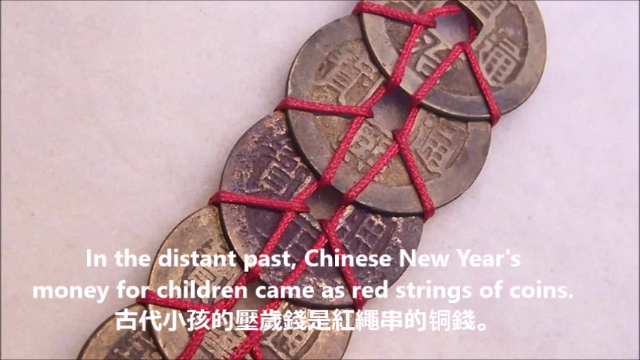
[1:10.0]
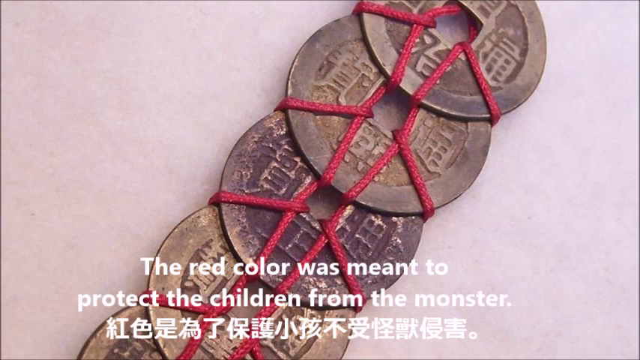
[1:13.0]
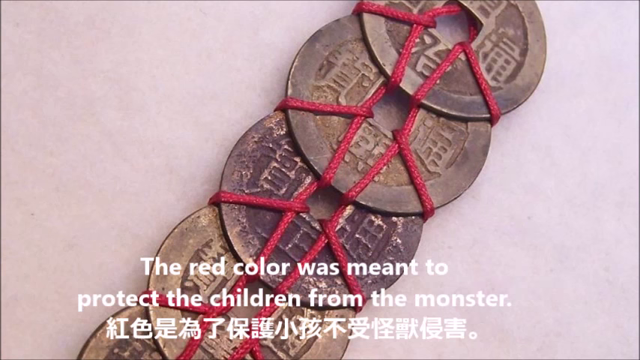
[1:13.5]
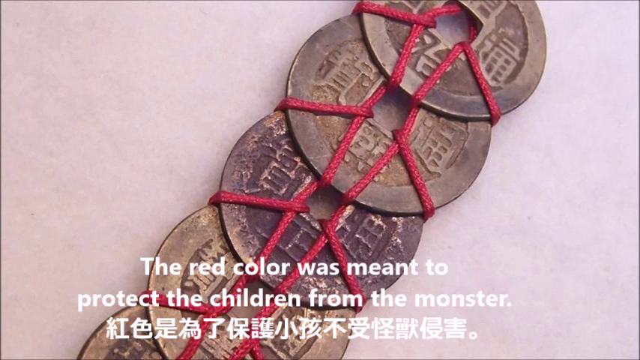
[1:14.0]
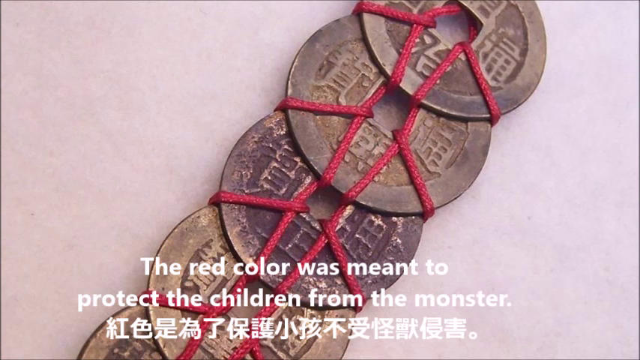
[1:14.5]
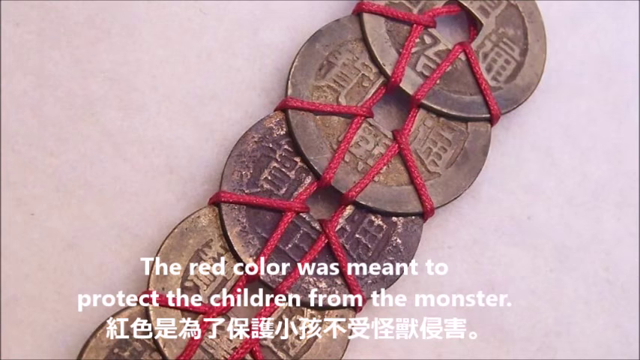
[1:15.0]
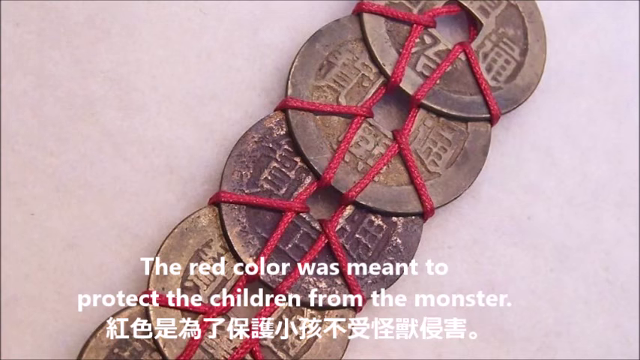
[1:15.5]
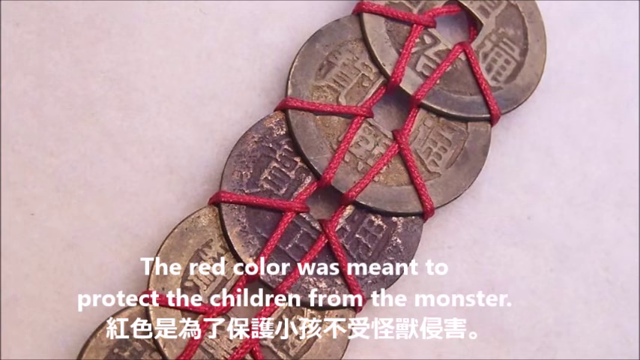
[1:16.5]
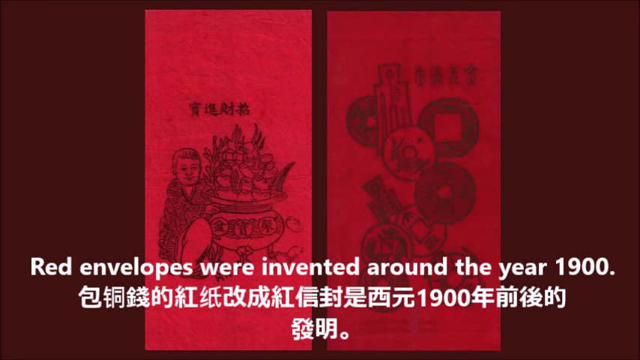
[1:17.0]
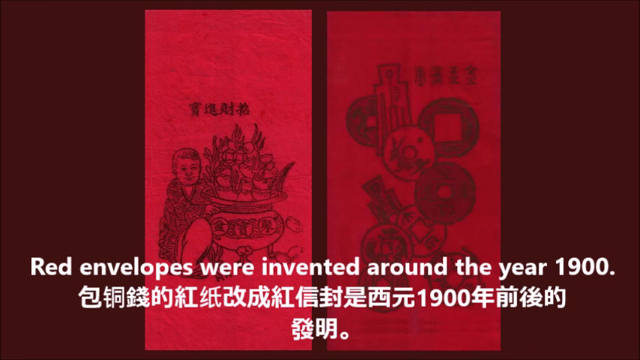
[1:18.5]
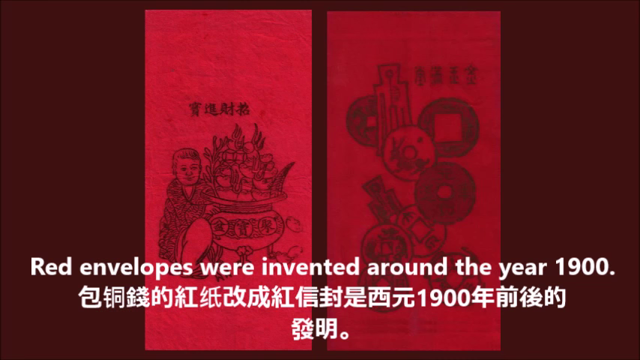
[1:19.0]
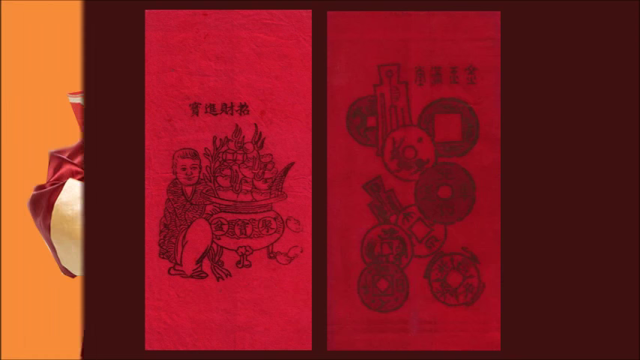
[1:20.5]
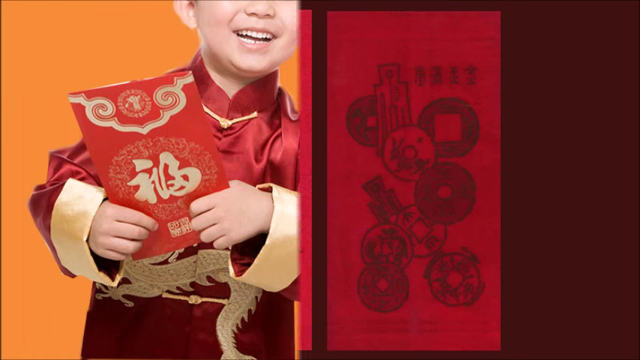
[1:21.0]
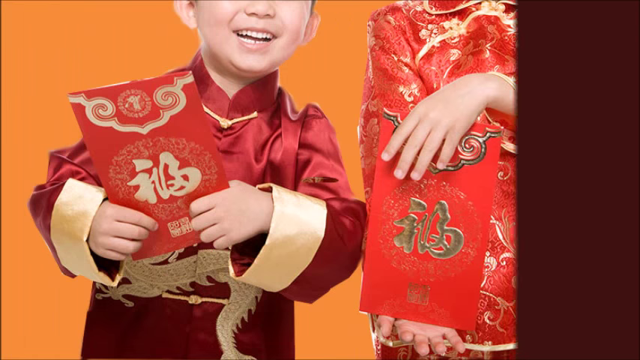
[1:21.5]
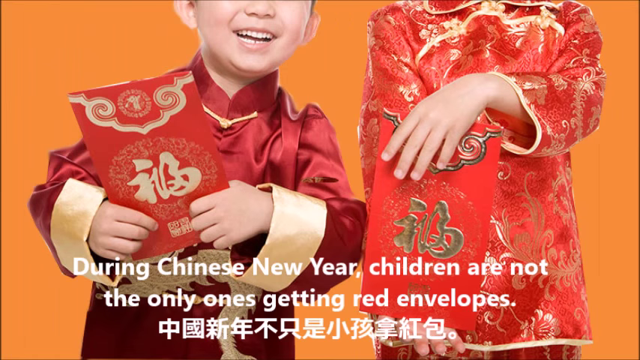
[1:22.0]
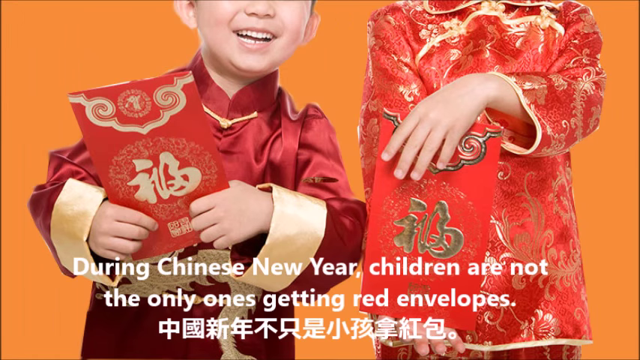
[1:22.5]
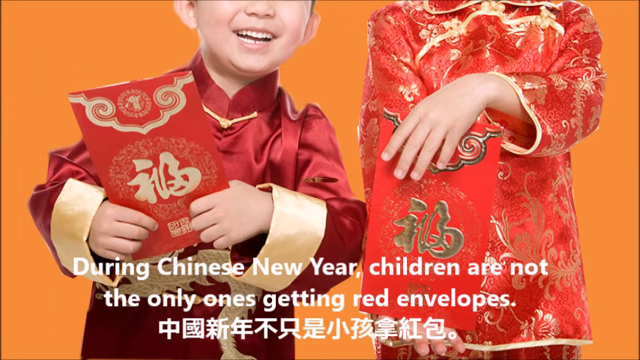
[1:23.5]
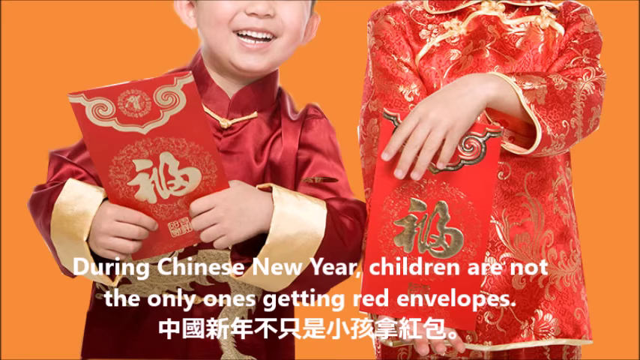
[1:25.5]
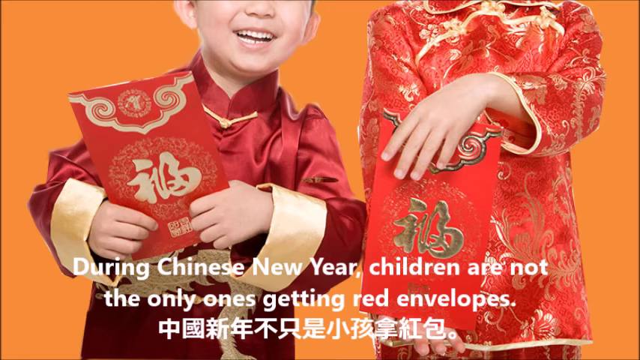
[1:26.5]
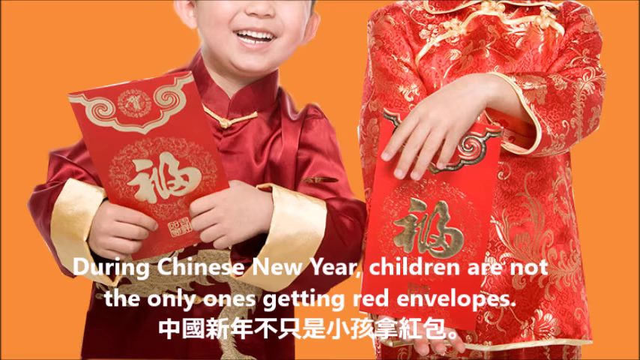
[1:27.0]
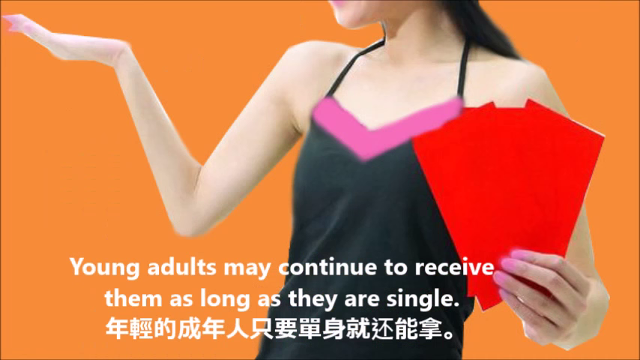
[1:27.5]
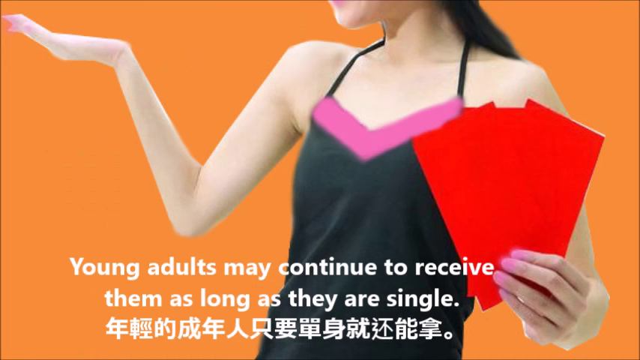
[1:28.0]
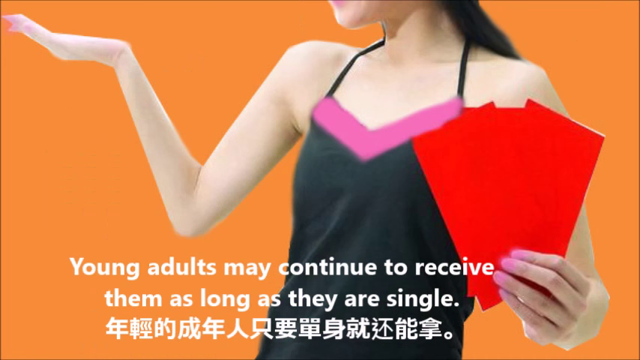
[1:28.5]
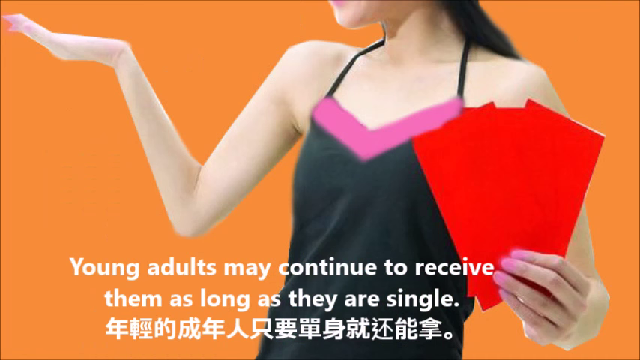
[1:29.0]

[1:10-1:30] White text at the bottom reads "the red colour was meant to protect the children from the monster". Two red envelopes appear, centred in the middle of the screen. The one on the left is illustrated with a small boy next to what looks like a pot with things in it; the one on the right shows coins and other objects. White text at the bottom reads "red envelopes were invented around the year 1900", again with Mandarin text. The screen swipes from left to right to a new screen with an orange background and two children. Neither child's eyes are visible, and the head of the child on the right is not visible at all because the shot is too low. The child on the left, whose nose and smiling mouth are visible, is holding one of the envelopes, and the girl on the right is also holding one. Text reads "during Chinese New Year children are not the only ones getting red envelopes. Young adults may continue to receive them as long as they are single". Then there is a picture of a woman shrugging her shoulders and holding three red envelopes in her left hand.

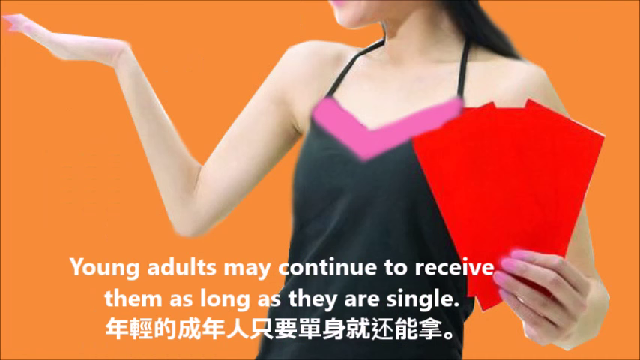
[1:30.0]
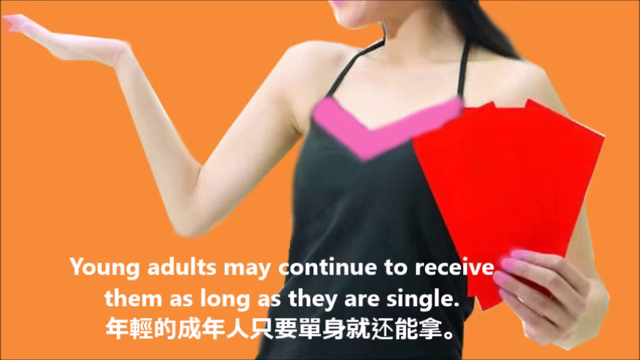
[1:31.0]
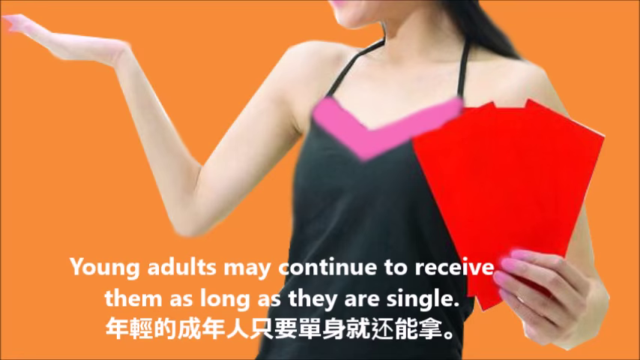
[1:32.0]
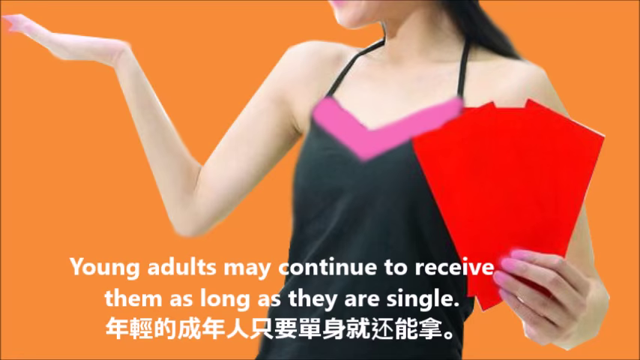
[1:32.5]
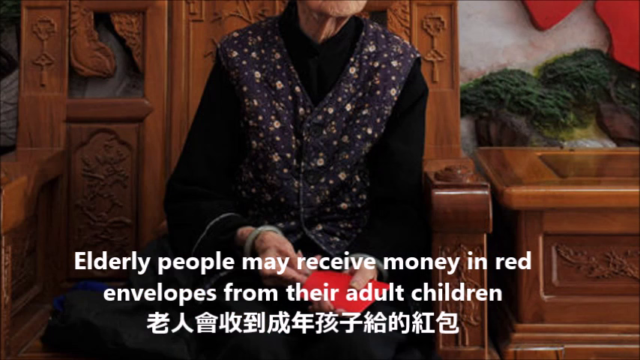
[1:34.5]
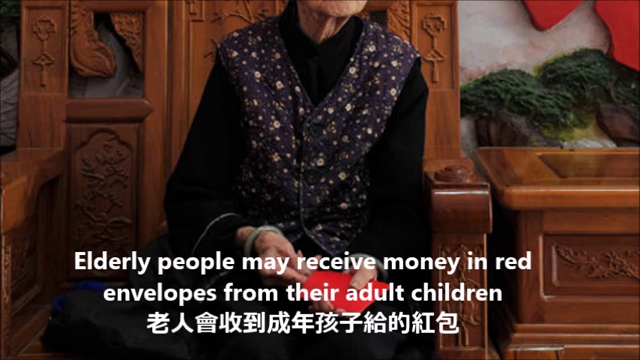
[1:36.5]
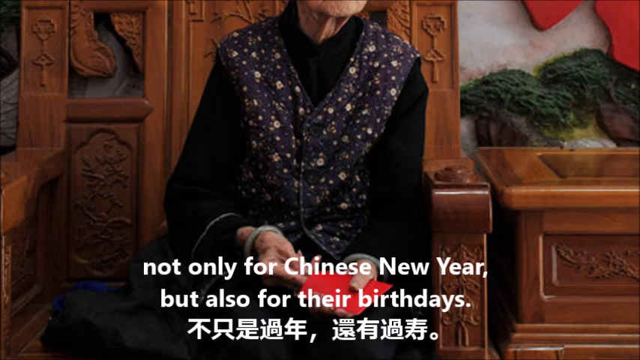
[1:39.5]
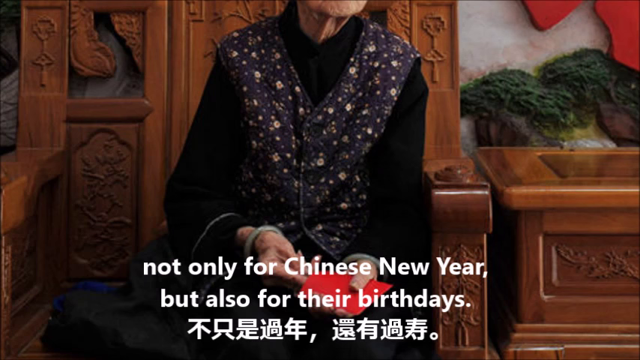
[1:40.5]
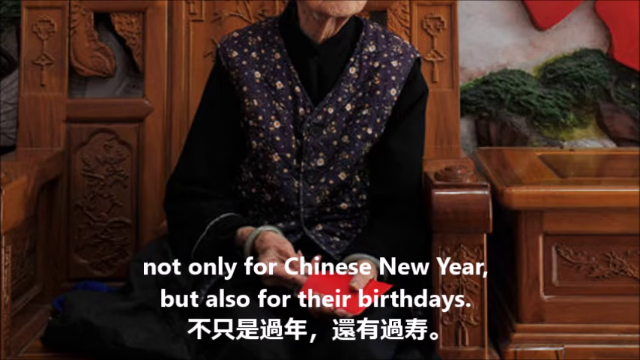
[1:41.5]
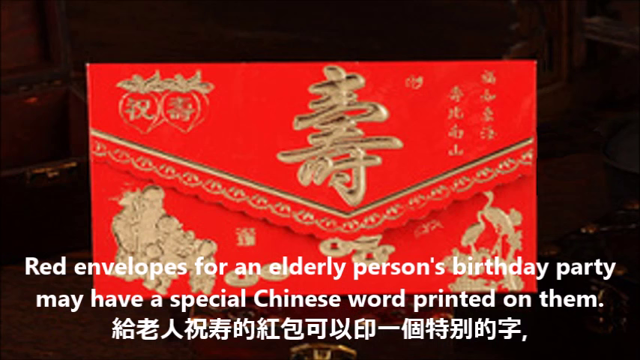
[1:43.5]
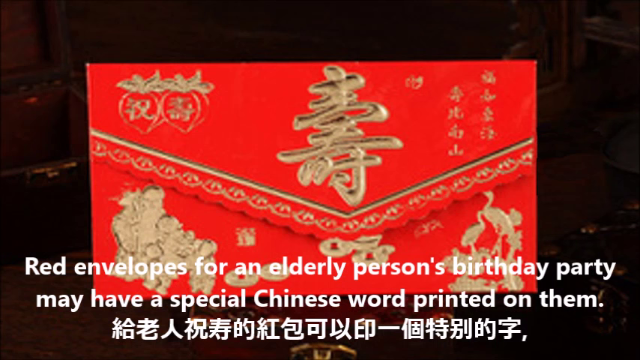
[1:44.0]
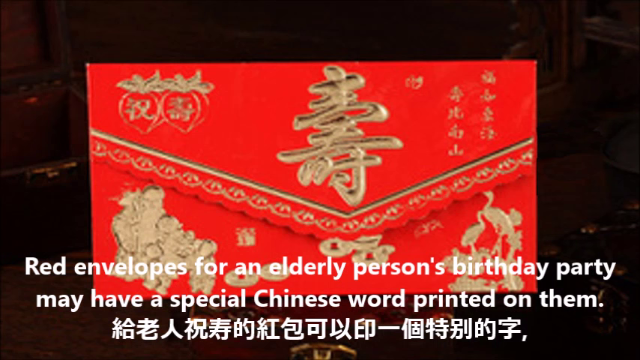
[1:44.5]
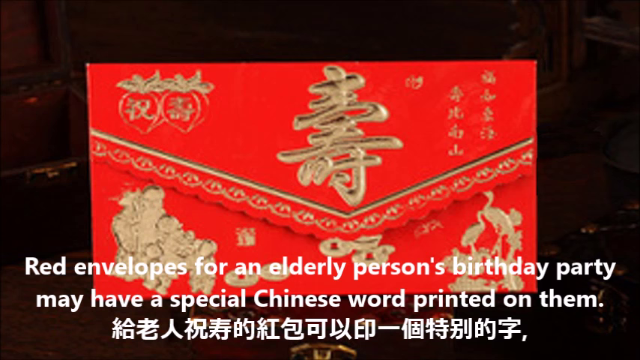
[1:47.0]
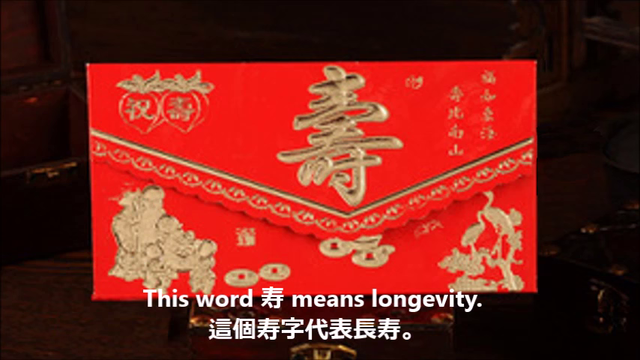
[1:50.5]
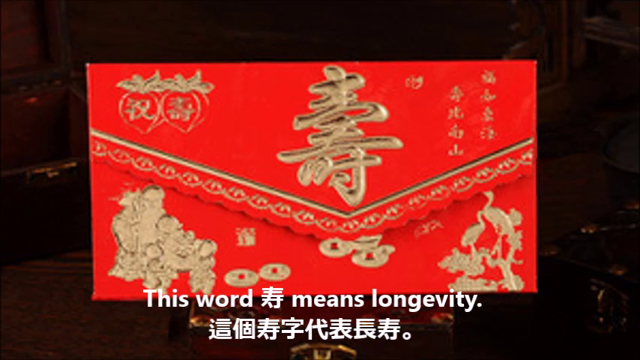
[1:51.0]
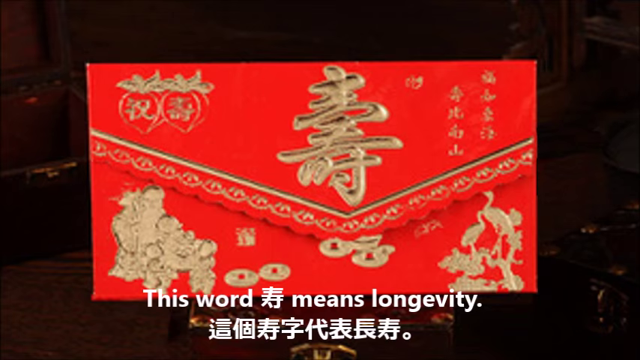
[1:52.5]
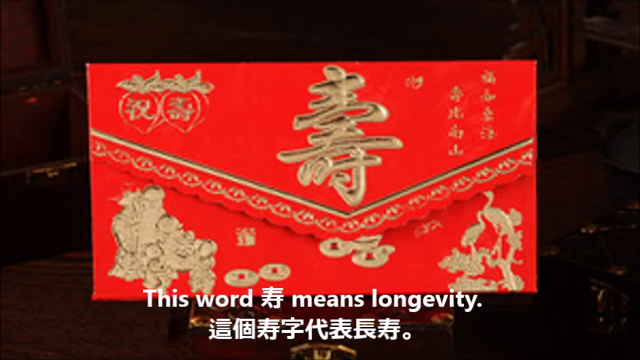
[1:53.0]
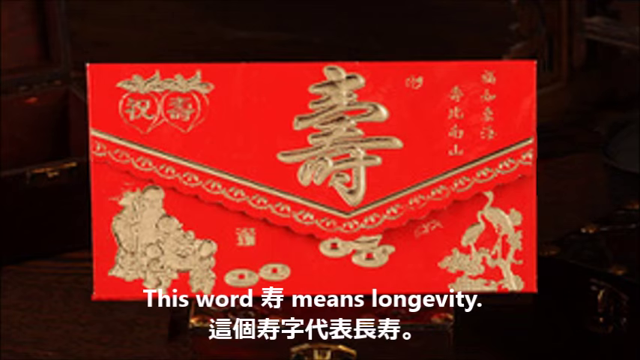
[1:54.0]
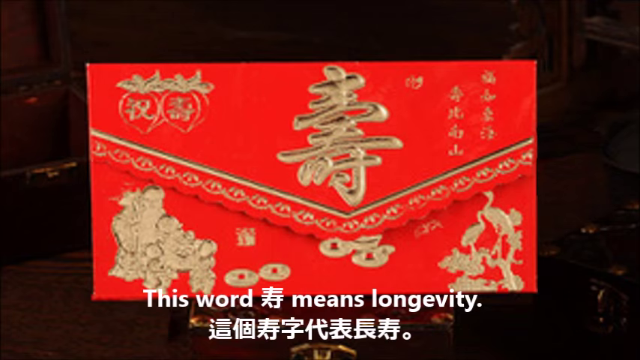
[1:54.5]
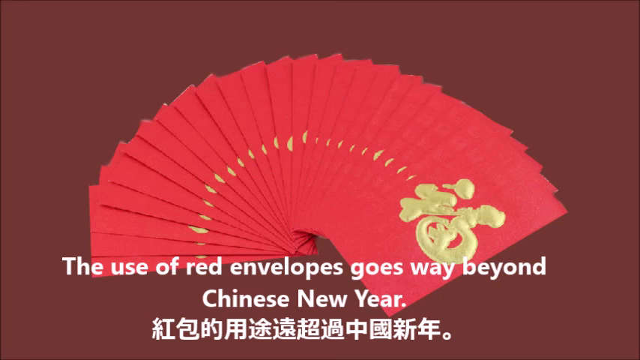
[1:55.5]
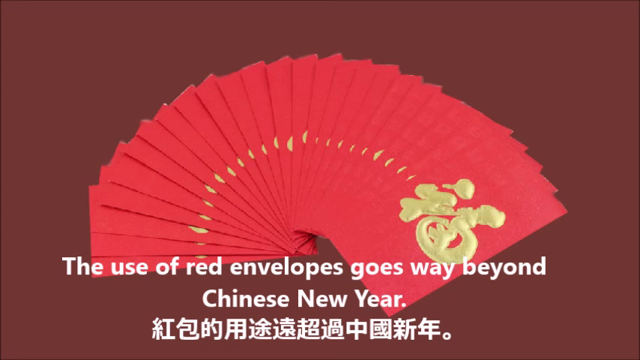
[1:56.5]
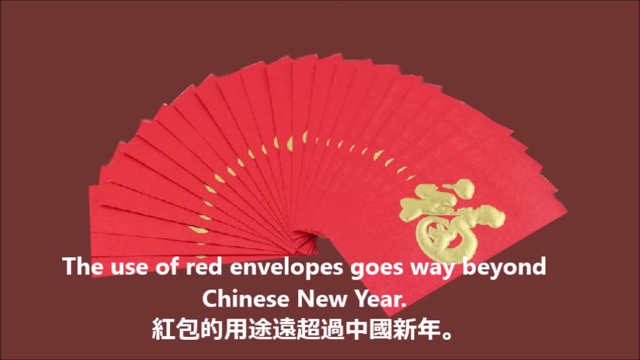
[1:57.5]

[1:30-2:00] White text at the bottom of the screen reads "elderly people may receive money in red envelopes from their adult children". In the background is a quite large wooden chair with an elderly woman in it, and a wooden table next to her. Her face is not visible, only her shoulders and upper body. She holds a red envelope mostly in her left hand while touching it with her right hand. White text then reads "not only for Chinese New Year but also for their birthdays". A new red envelope appears, with a scalloped edge and bold inscriptions, various letters and illustrations all over it. Text at the bottom reads "red envelopes for an elderly person's birthday party may have a special Chinese word printed on them. This word means longevity", and the illustration of the word longevity is visible on the envelope. Multiple different envelopes are then shown stacked, with text reading "the use of red envelopes goes way beyond Chinese New Year".